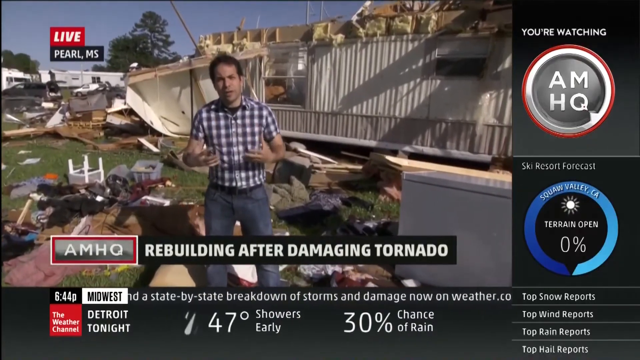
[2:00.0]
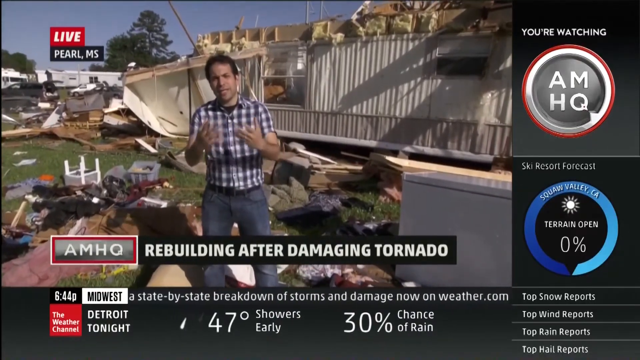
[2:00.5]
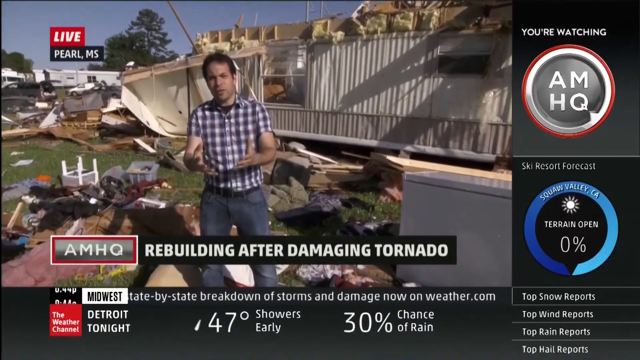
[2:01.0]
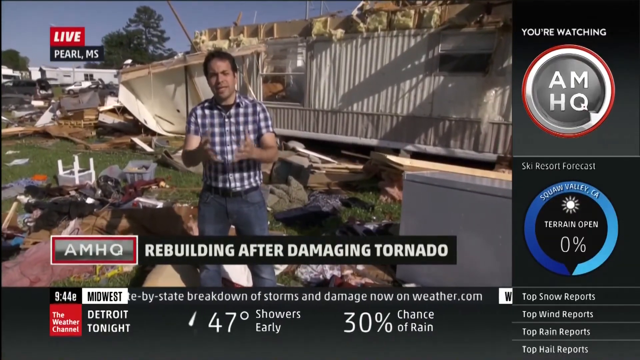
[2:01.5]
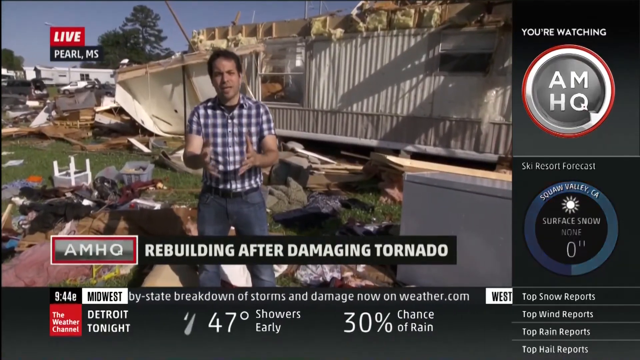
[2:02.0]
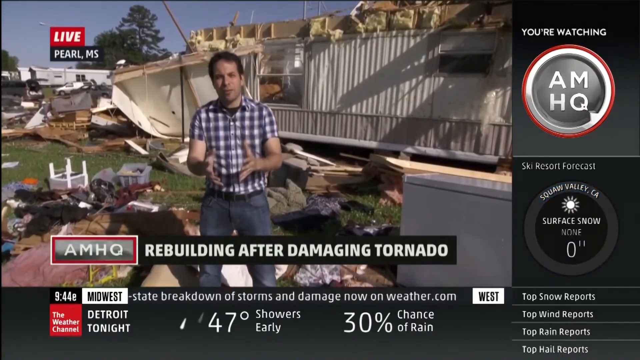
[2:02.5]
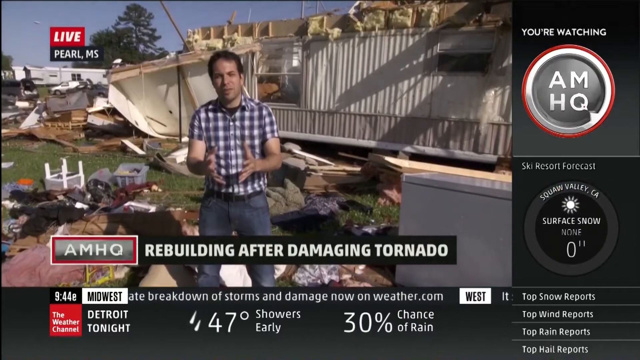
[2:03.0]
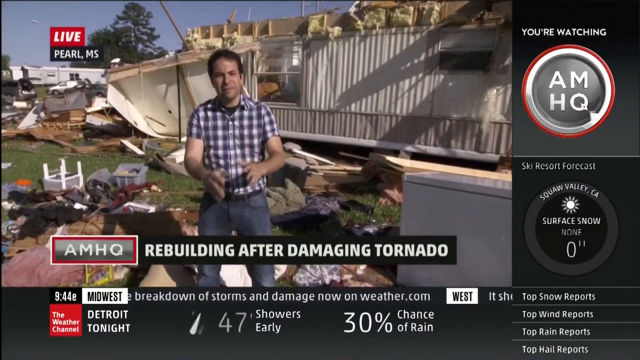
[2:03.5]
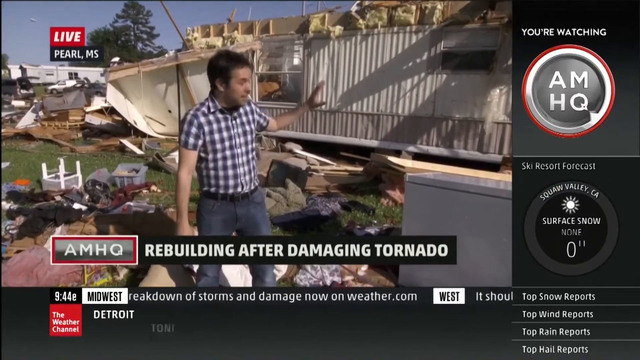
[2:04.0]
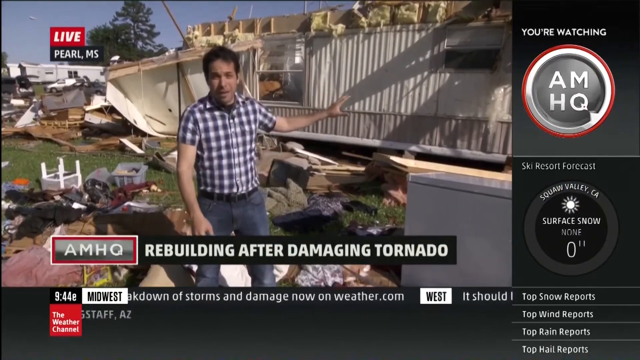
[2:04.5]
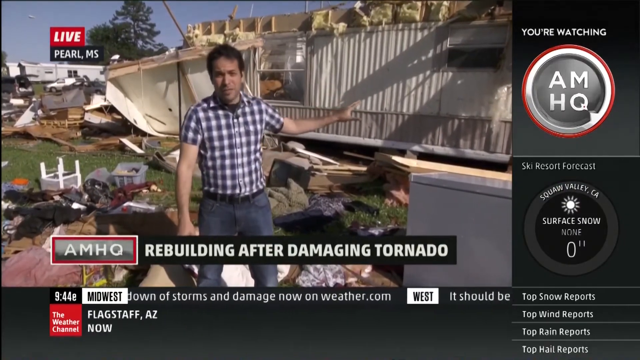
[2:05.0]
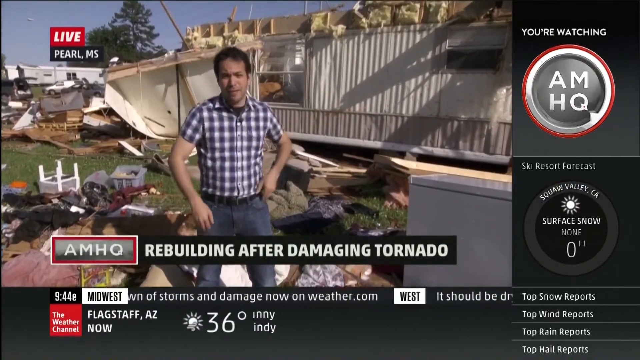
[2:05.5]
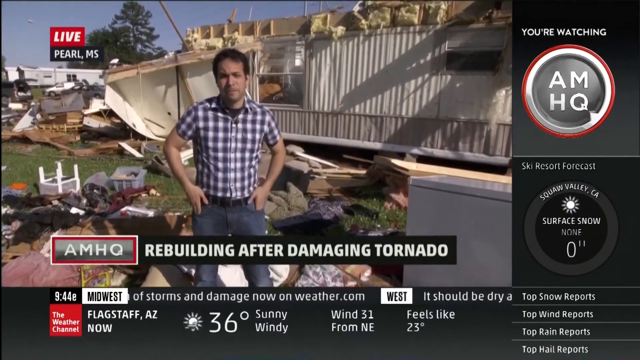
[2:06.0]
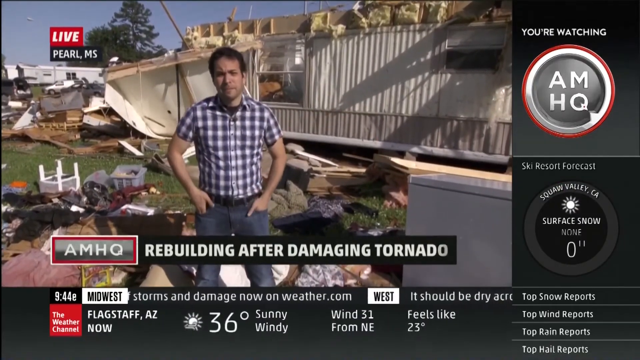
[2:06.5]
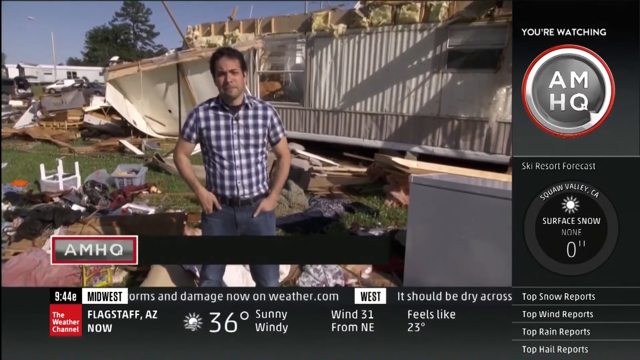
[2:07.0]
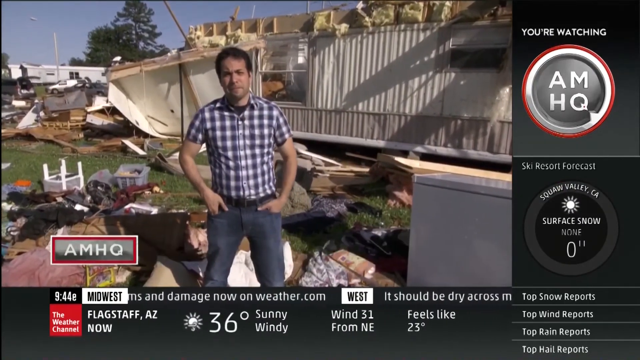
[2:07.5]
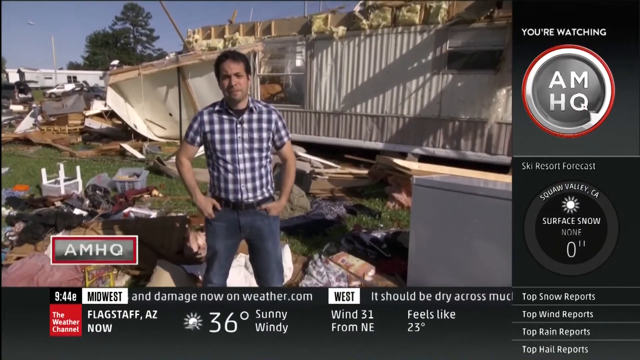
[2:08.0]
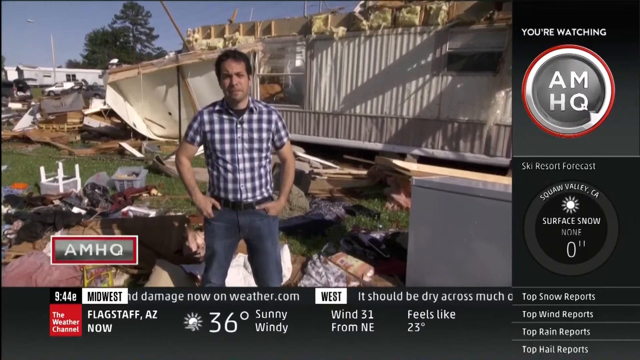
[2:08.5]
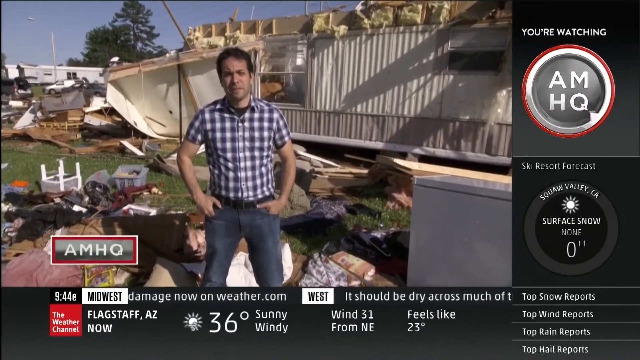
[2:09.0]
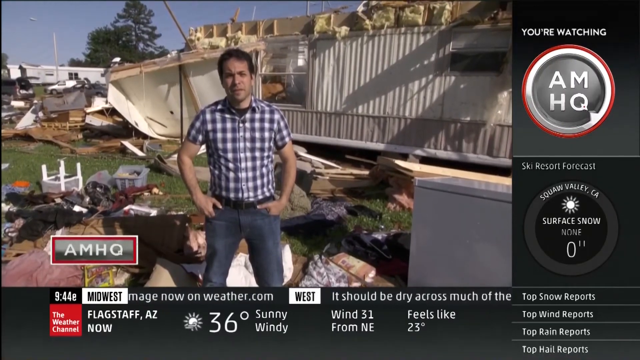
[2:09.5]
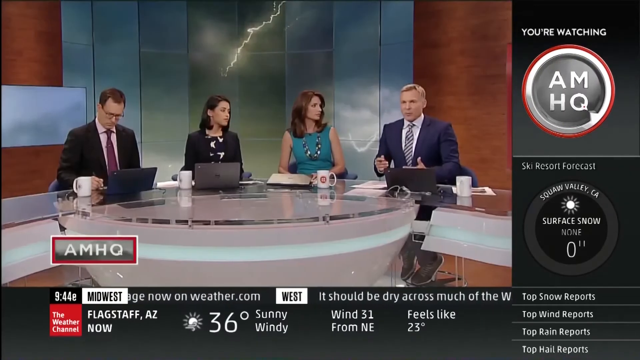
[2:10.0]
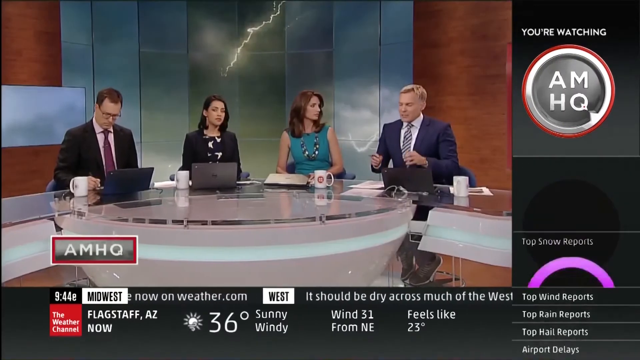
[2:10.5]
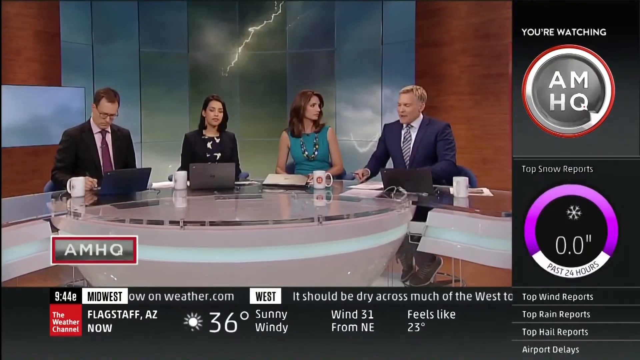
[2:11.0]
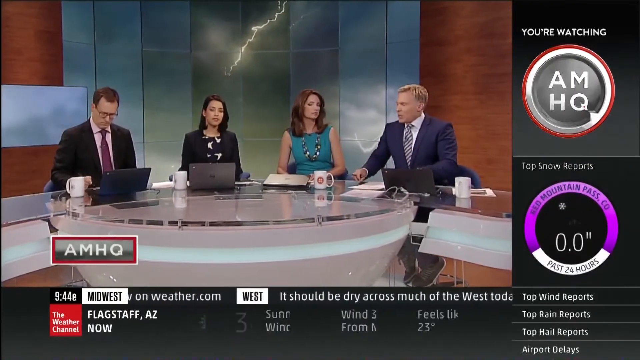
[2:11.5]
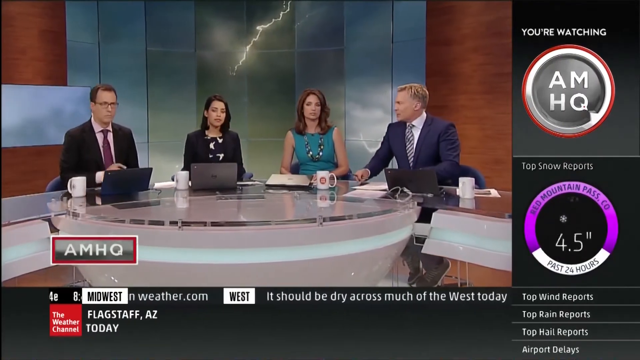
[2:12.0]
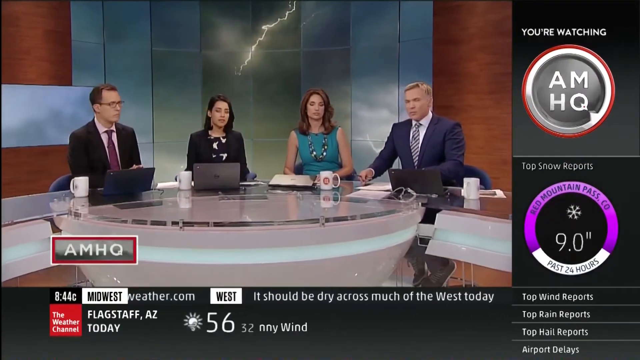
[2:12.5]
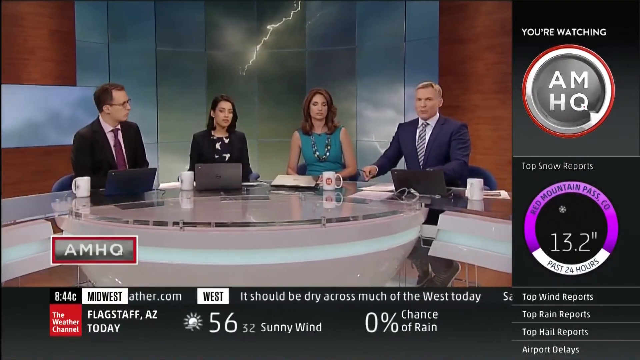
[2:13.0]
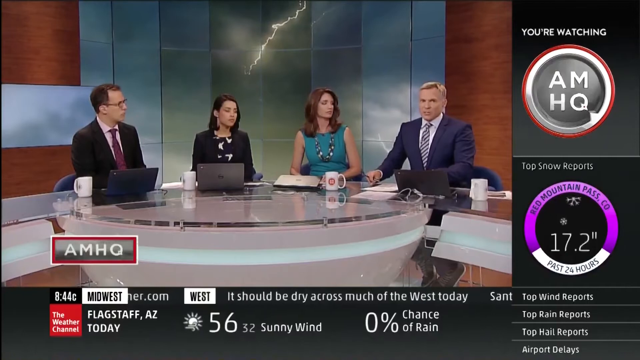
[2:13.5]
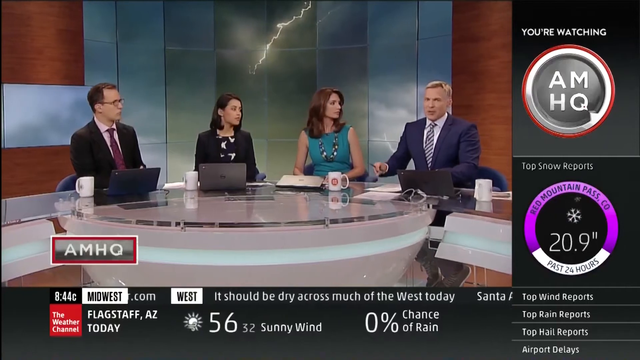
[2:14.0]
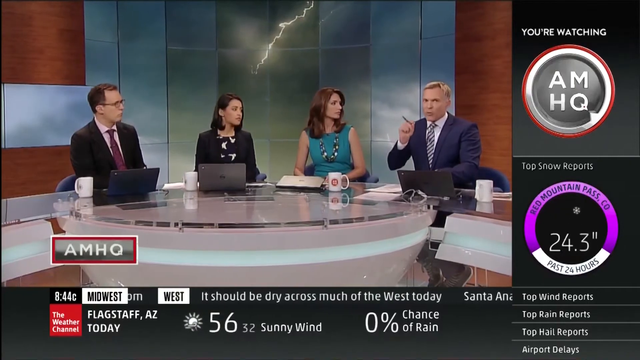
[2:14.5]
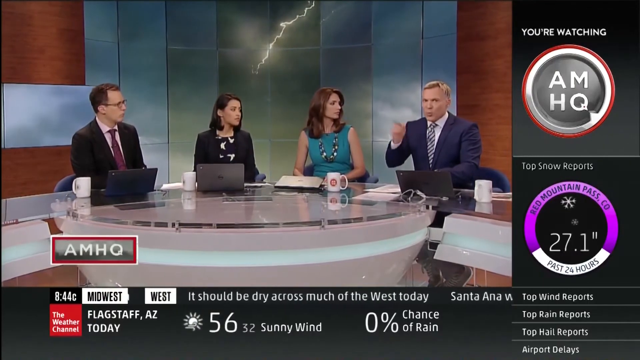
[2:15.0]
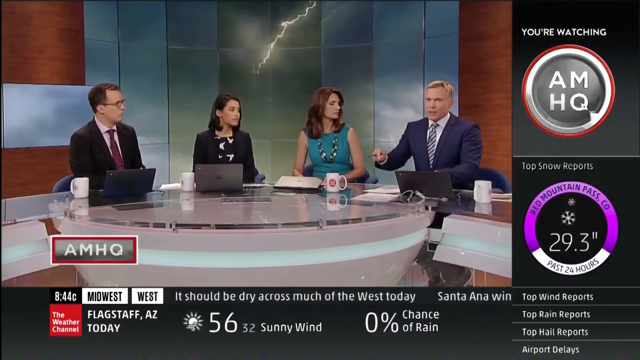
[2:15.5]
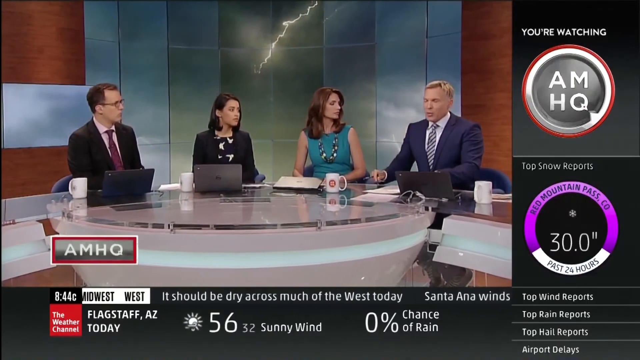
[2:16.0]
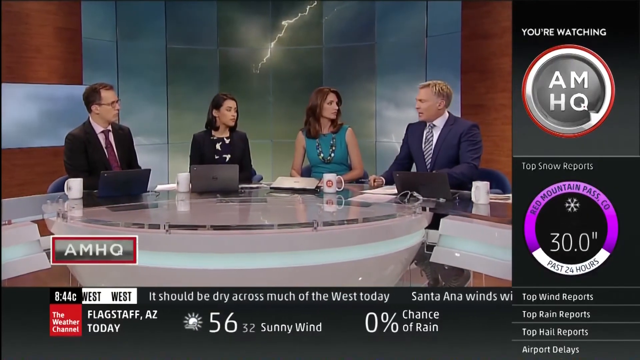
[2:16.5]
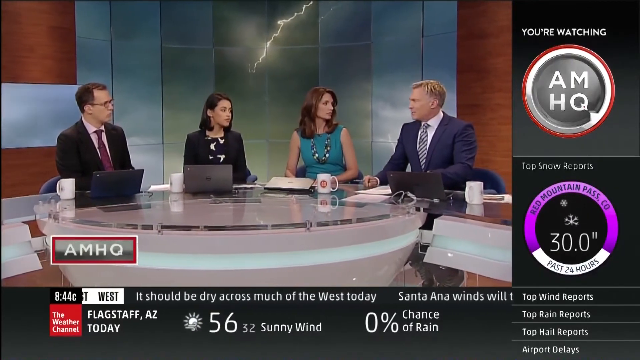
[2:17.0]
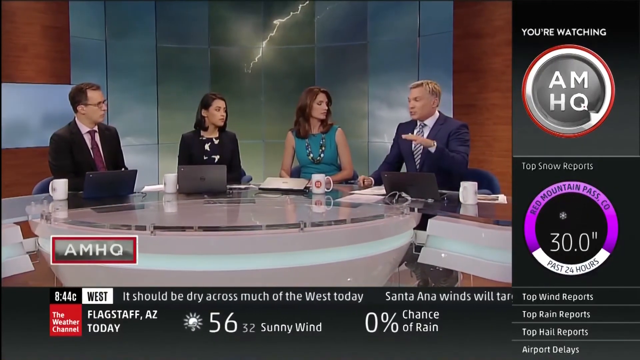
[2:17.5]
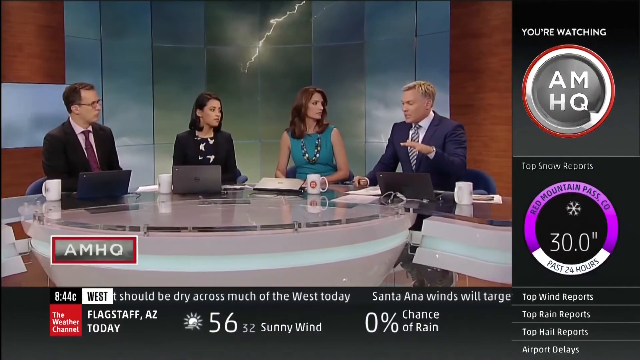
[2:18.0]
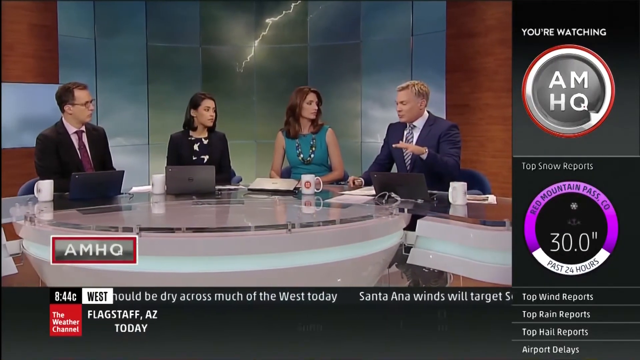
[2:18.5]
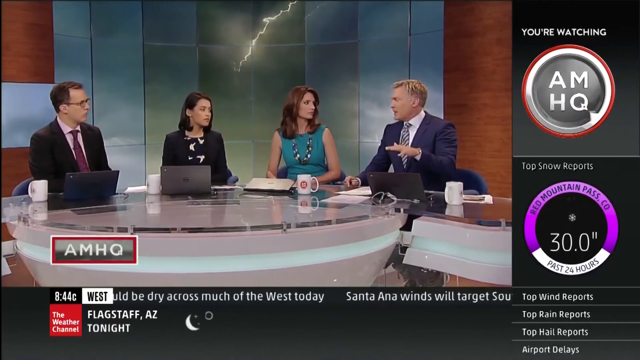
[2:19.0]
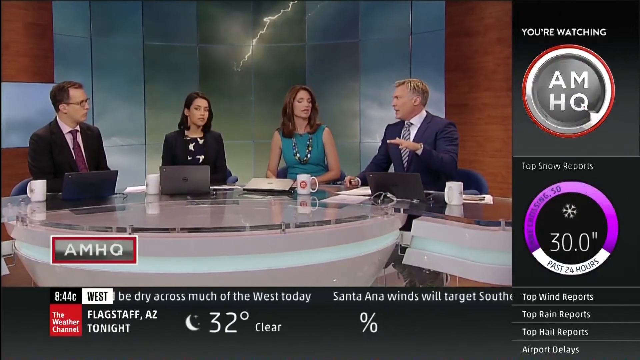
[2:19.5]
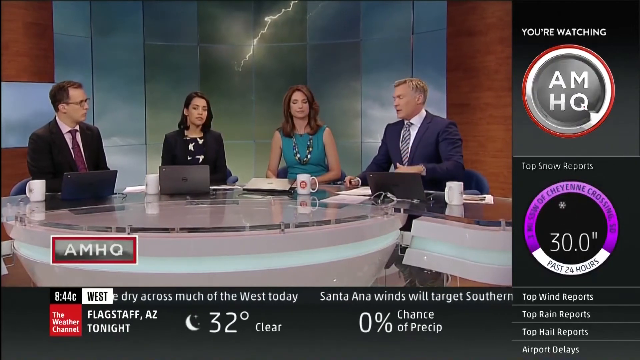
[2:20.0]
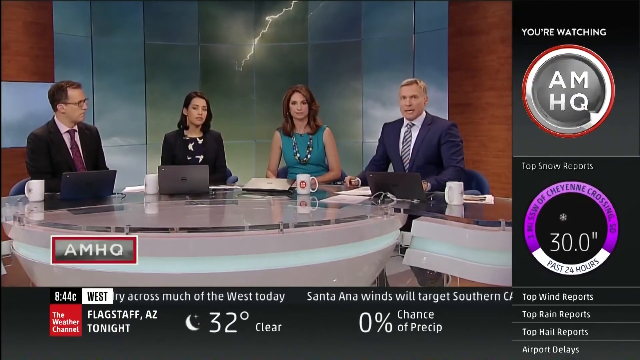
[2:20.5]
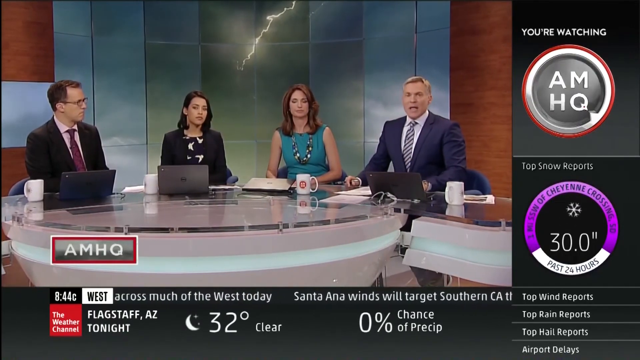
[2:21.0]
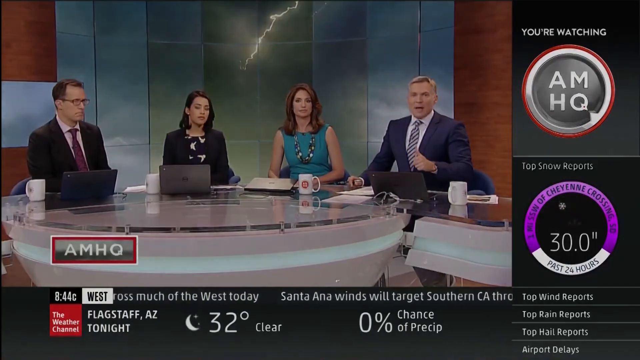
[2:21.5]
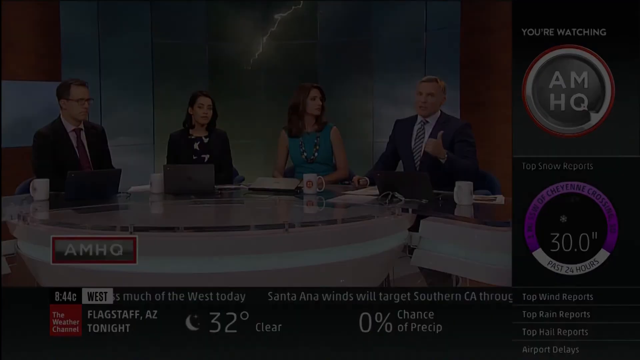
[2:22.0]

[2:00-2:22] Dave, still at the scene, finishes talking and puts two hands in his pockets. The video returns to the studio, where two men and two women sit; the two women are in the middle with the men beside them. The first man wears a black suit with a white shirt and a tie. A woman wears a green gown with a bead over her neck. The other woman also wears a black suit. The other man wears a black suit with a white shirt and something kind of deep purple. They all discuss the tornado and press their laptop. The news is from AMHQ.